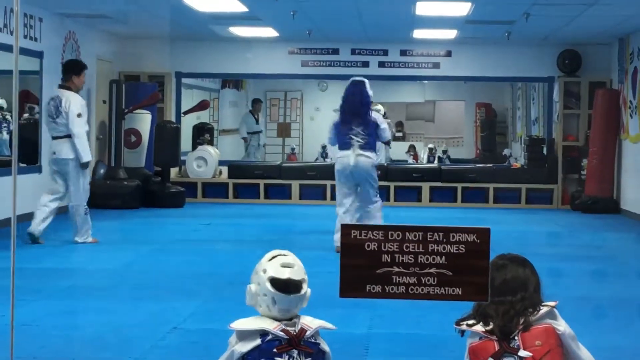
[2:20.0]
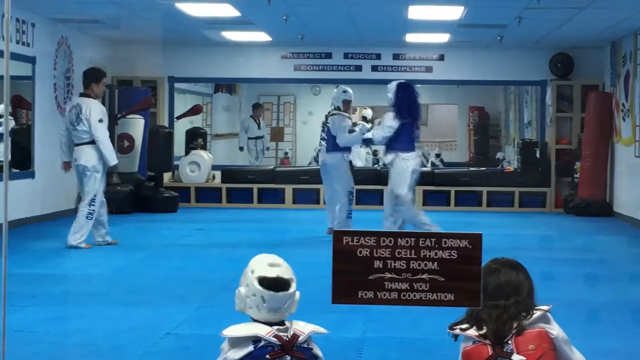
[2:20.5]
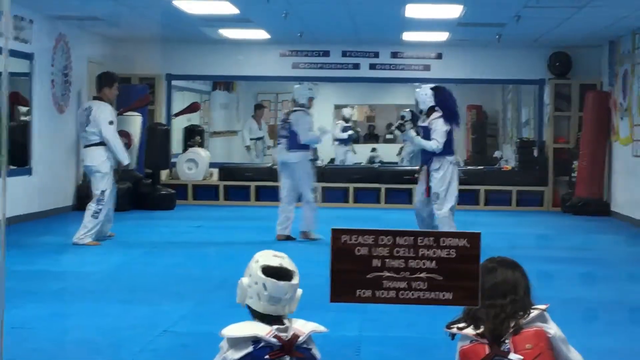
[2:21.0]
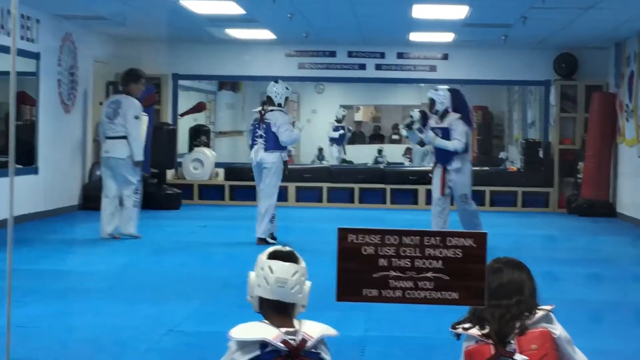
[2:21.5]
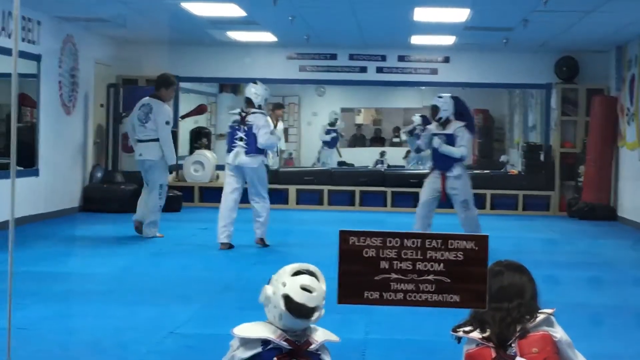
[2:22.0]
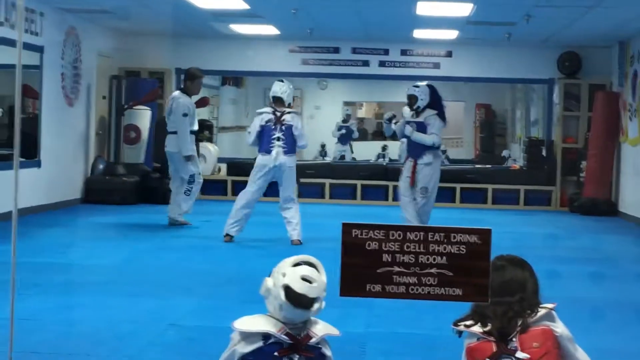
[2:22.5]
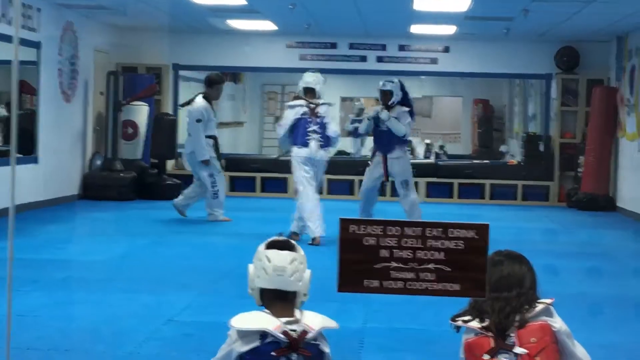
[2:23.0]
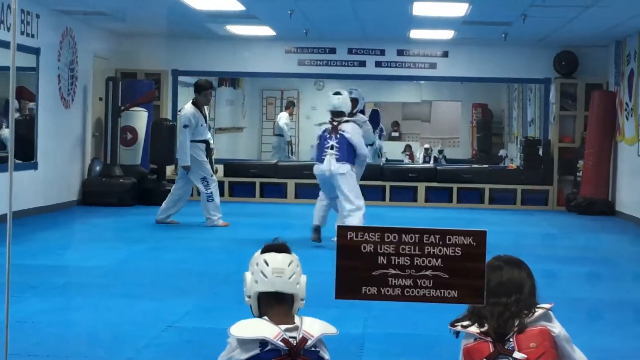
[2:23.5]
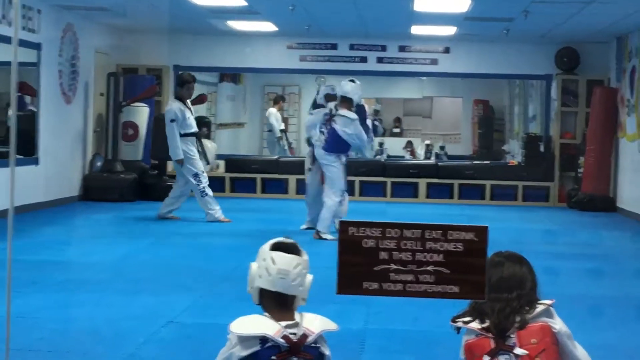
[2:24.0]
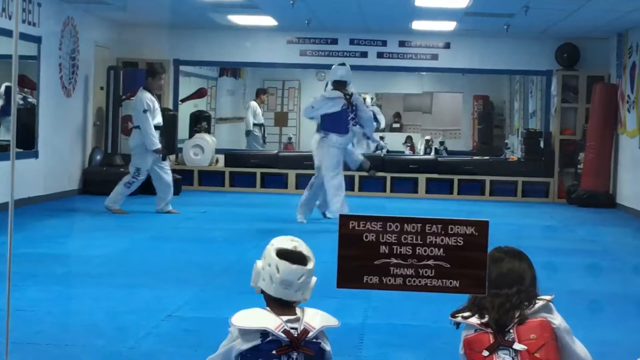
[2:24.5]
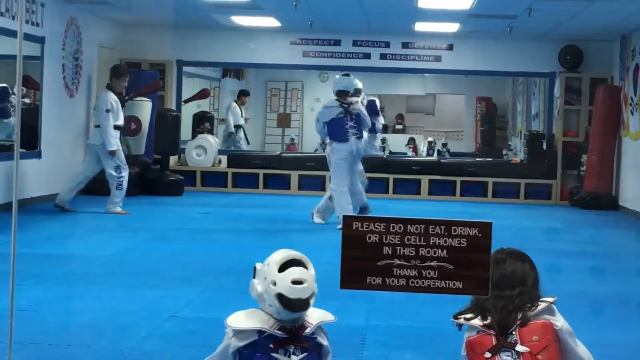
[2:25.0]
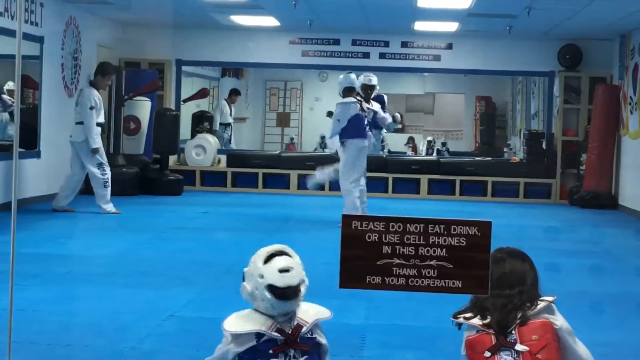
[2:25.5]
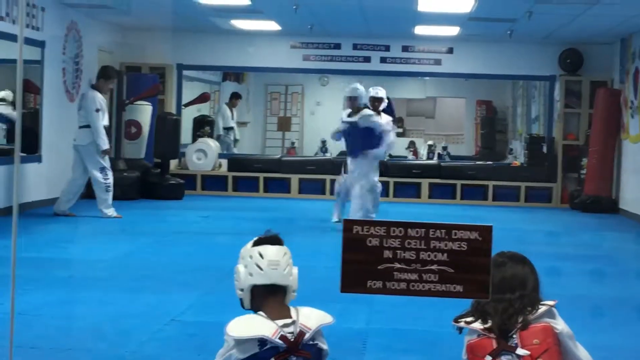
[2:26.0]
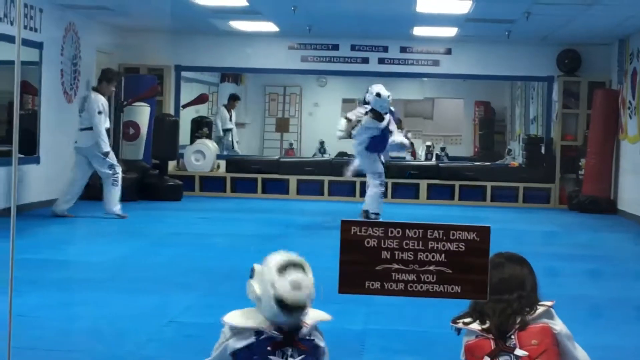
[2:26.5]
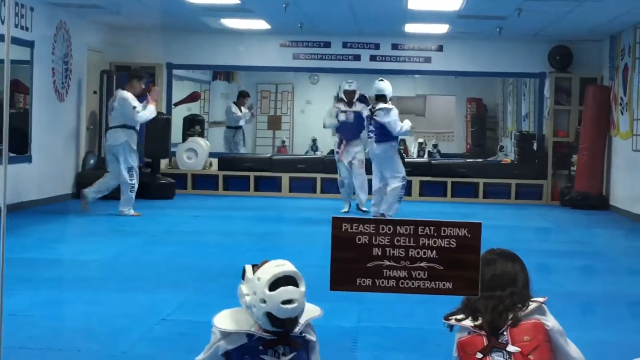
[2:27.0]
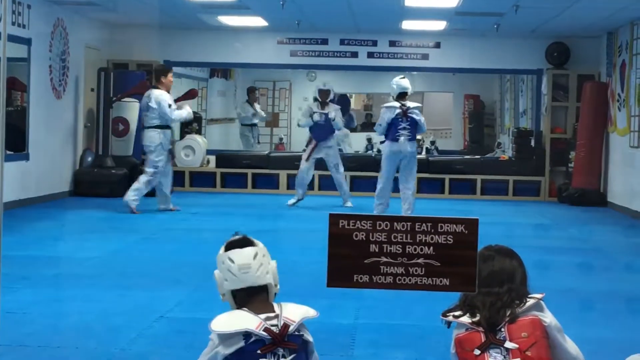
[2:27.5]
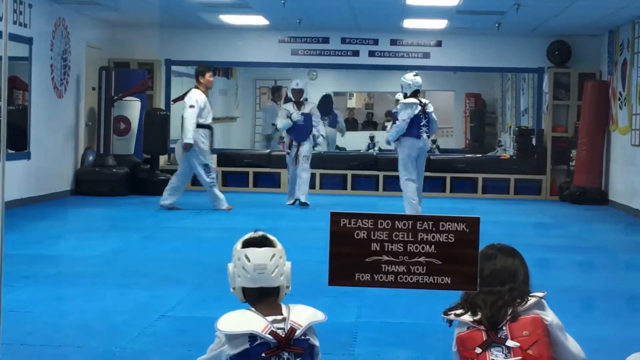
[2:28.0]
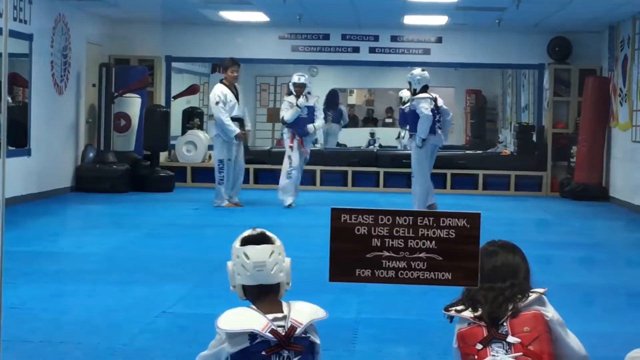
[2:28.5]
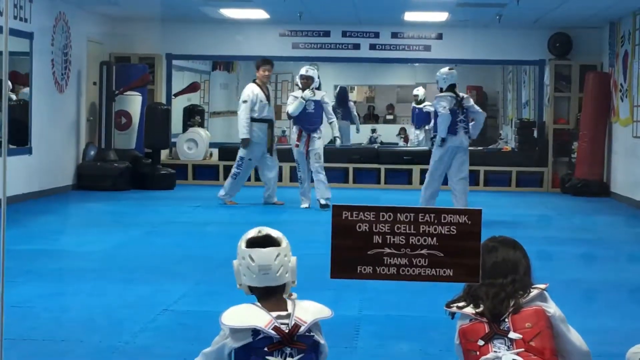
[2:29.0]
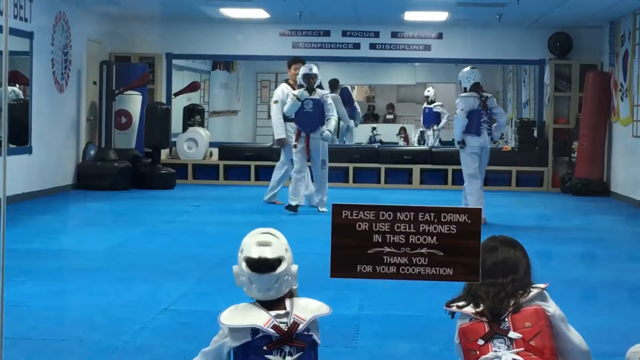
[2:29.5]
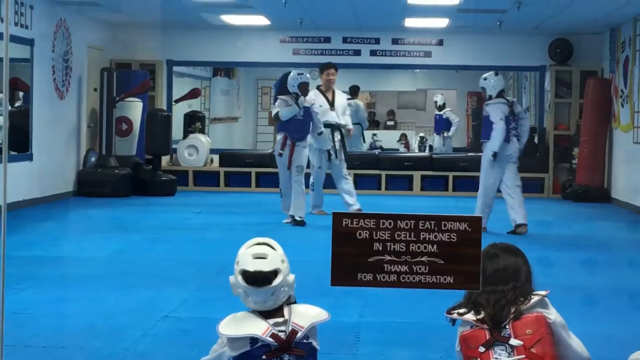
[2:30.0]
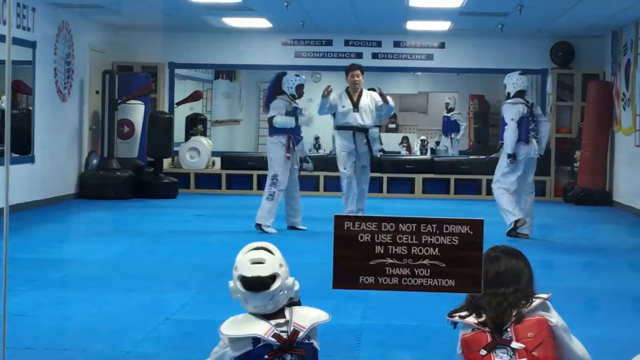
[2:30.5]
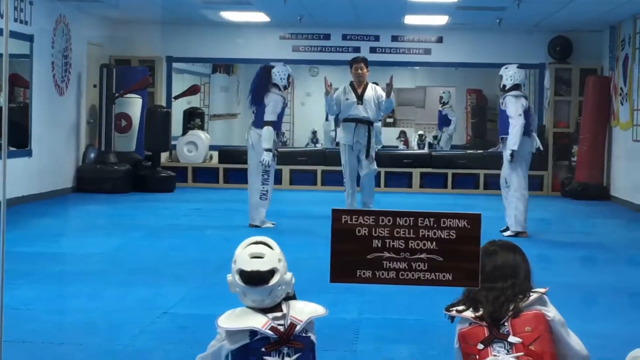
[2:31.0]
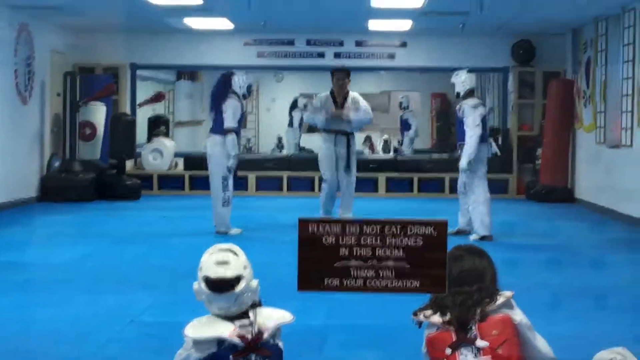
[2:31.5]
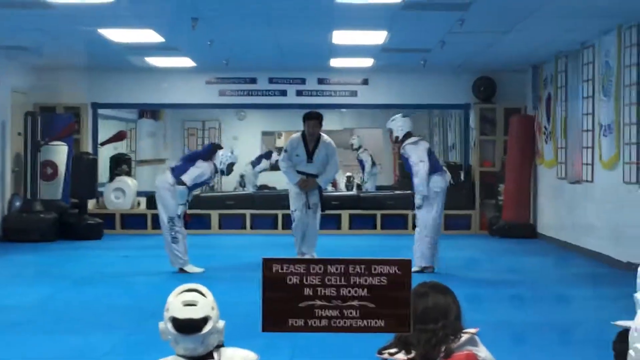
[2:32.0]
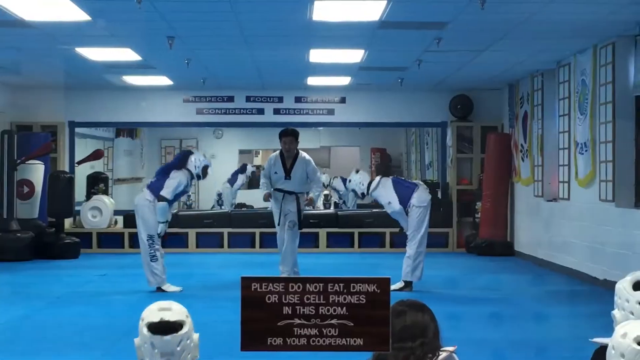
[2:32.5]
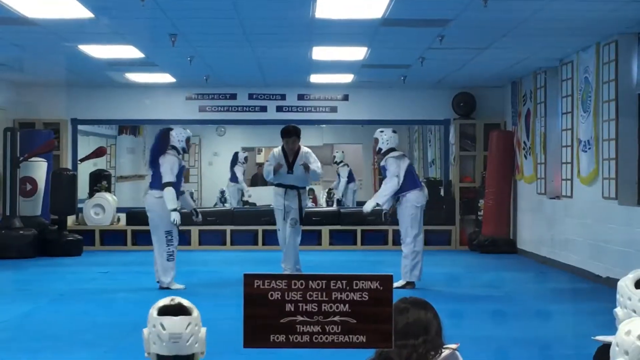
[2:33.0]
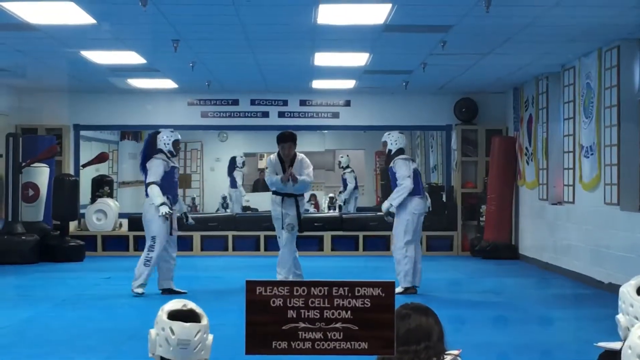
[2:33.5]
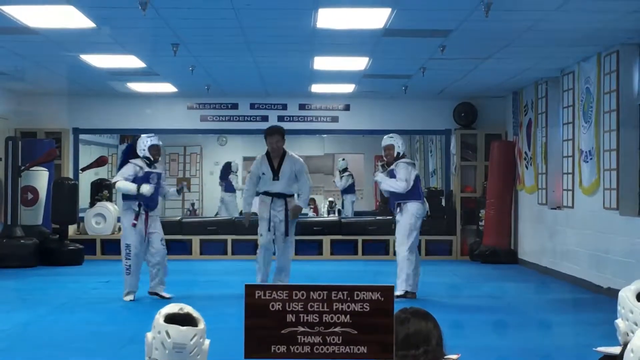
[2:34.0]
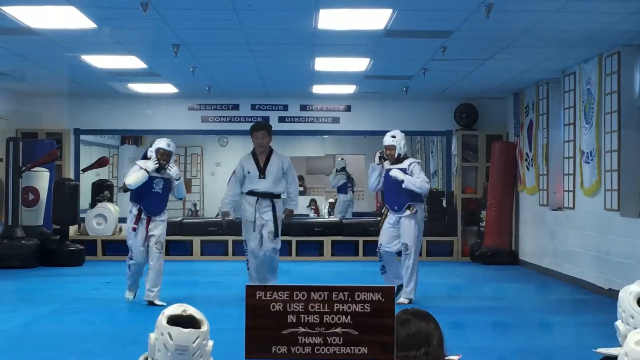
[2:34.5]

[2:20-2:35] In the karate dojo, the two fighters are in the middle and the instructor is on the left. The flooring is blue padding. There are two large reflective windows, one in the background middle and one on the far left. The two fighters sort of get ready in their stances. One of the fighters lifts their legs twice in a spin kick, and the instructor stops the fight. The two fighters bow to each other and, smiling, approach the kids who are watching. In front of the kids is a sign that says "please don't eat, drink or use cell phones in this room. Thank you for your cooperation." Above the middle there is text that says "respect, focus, defense, confidence, discipline."